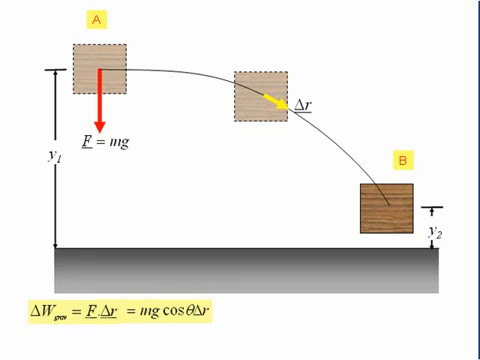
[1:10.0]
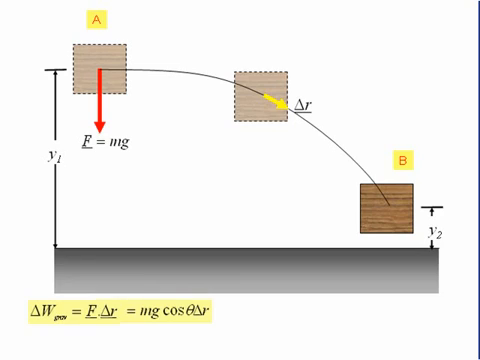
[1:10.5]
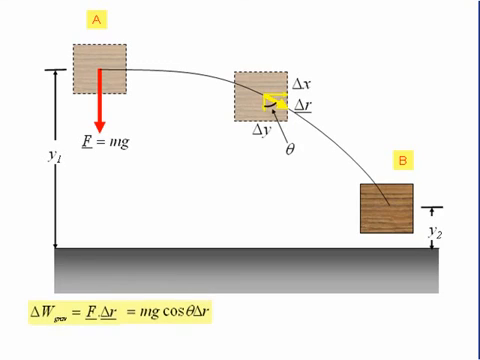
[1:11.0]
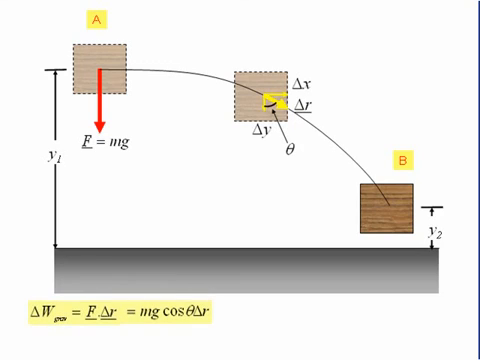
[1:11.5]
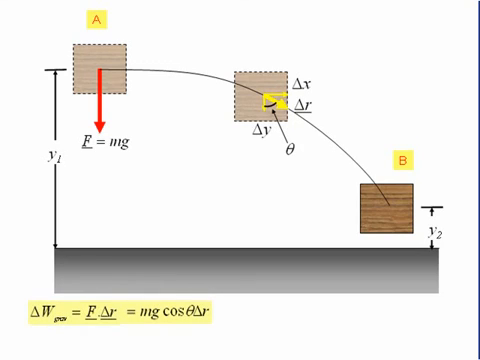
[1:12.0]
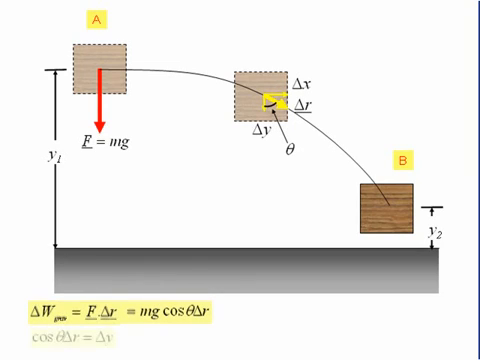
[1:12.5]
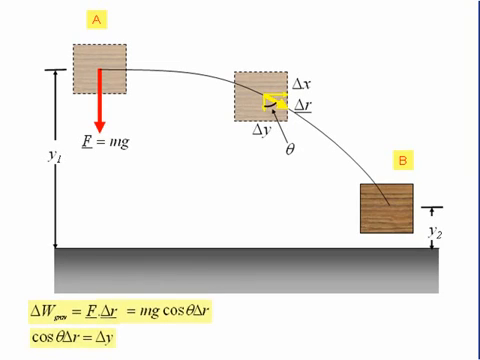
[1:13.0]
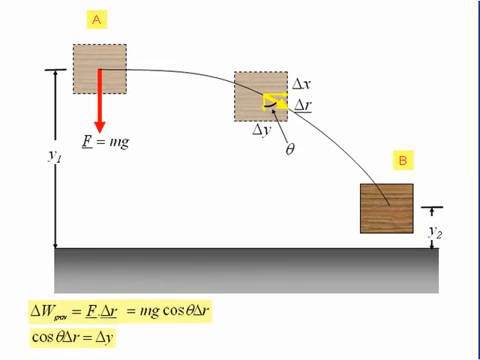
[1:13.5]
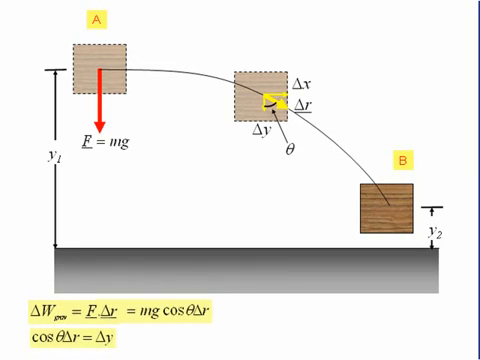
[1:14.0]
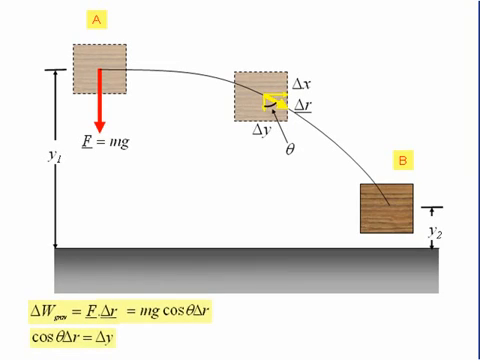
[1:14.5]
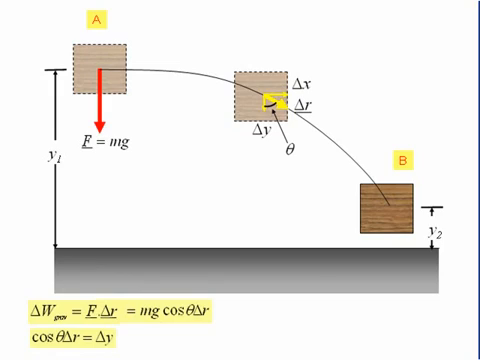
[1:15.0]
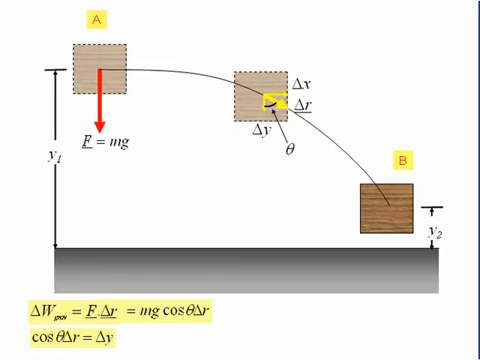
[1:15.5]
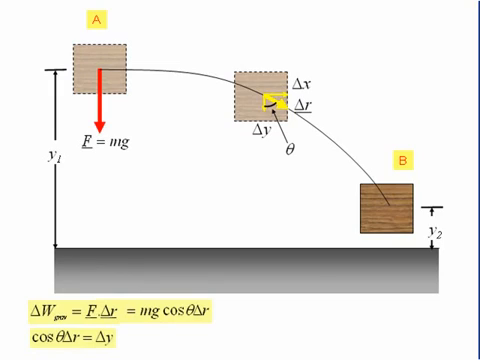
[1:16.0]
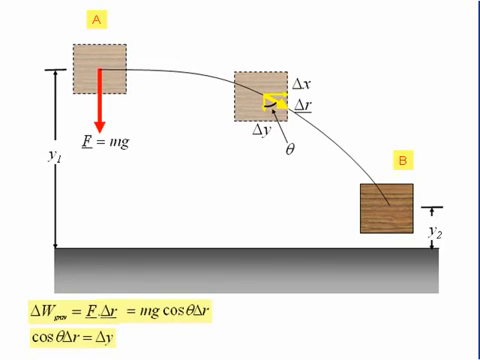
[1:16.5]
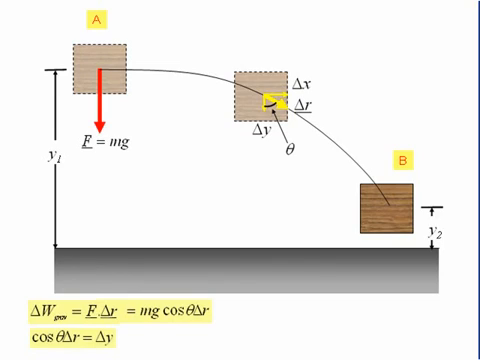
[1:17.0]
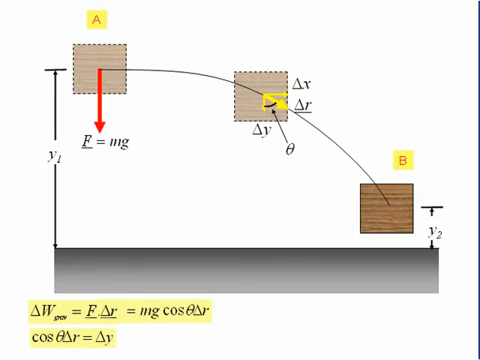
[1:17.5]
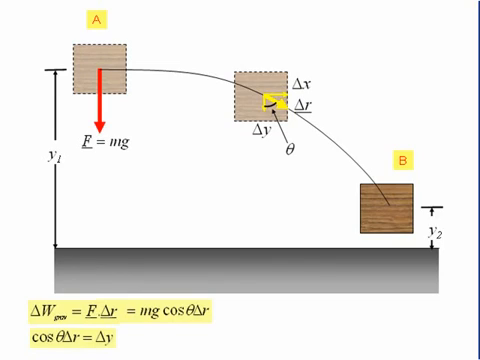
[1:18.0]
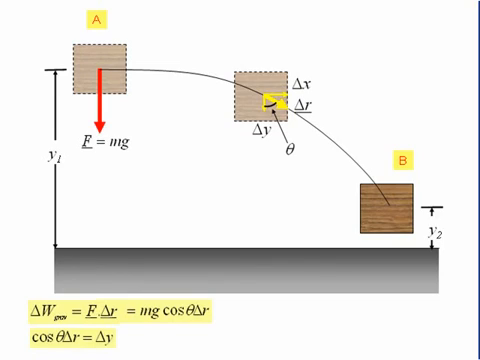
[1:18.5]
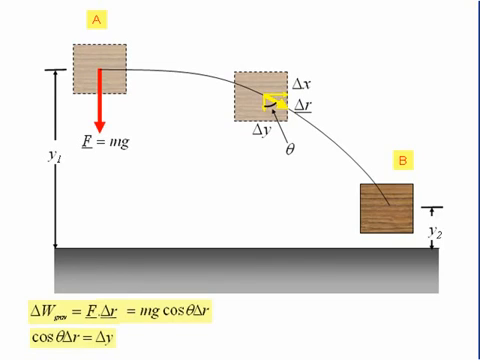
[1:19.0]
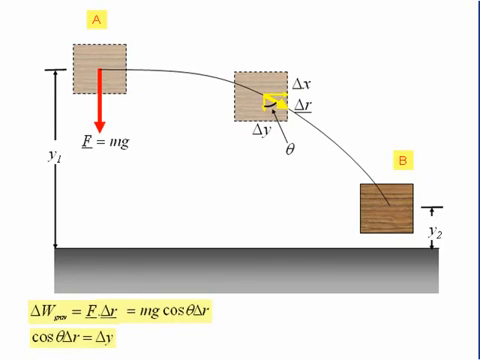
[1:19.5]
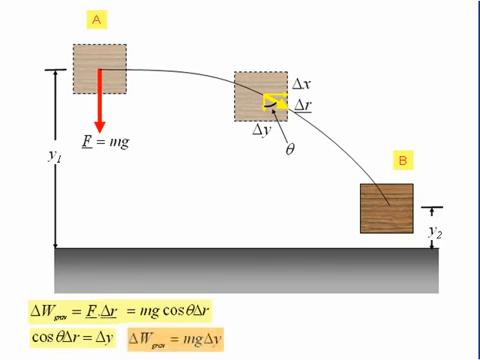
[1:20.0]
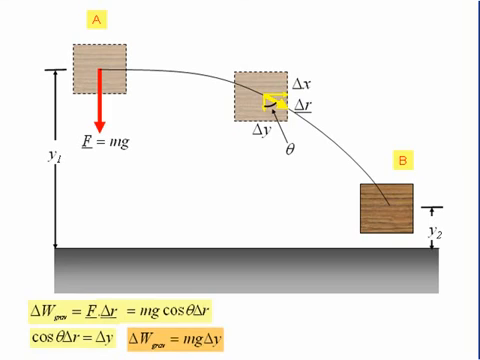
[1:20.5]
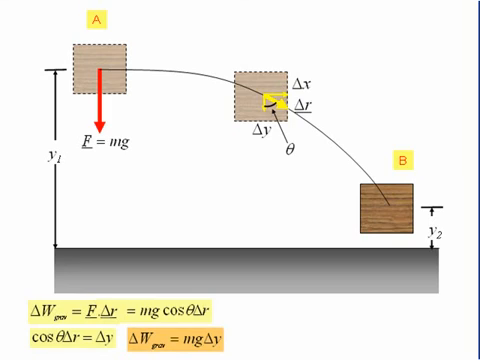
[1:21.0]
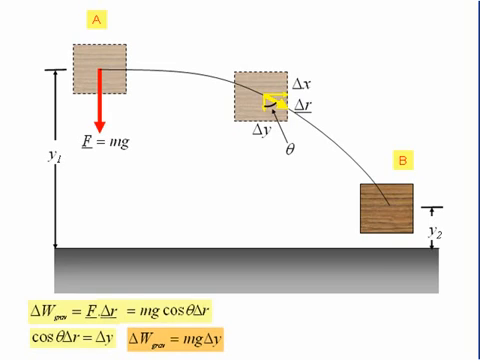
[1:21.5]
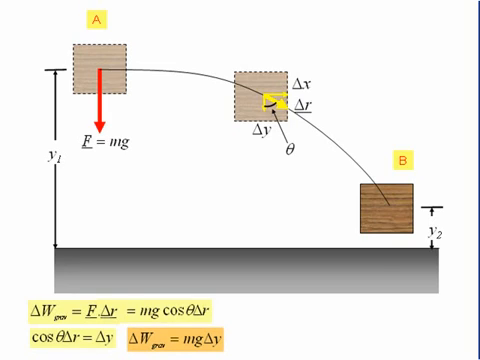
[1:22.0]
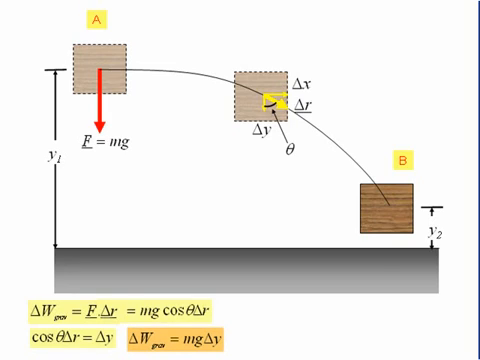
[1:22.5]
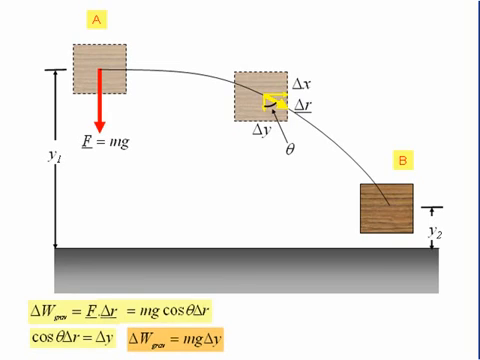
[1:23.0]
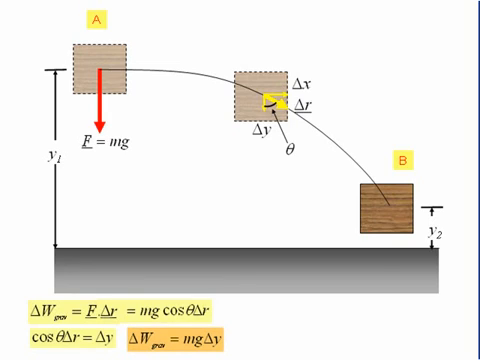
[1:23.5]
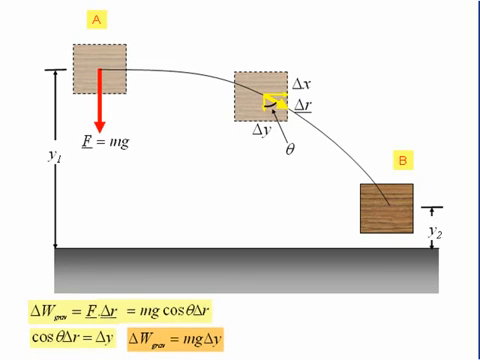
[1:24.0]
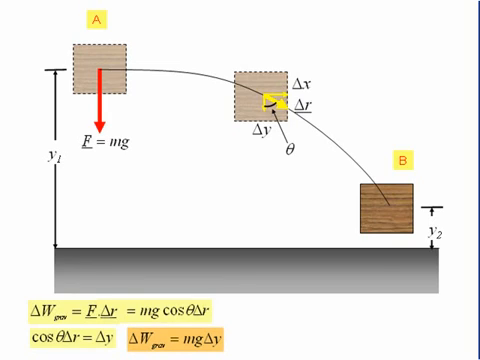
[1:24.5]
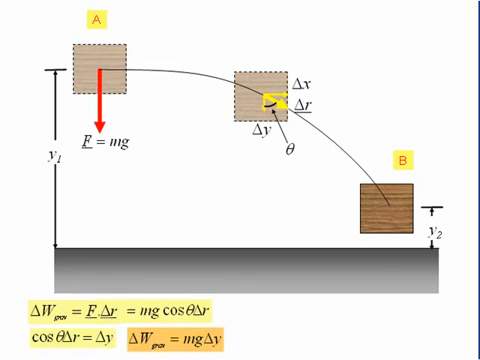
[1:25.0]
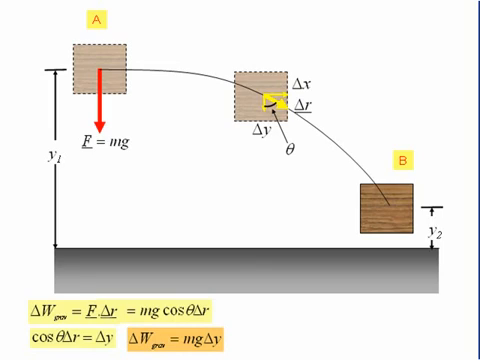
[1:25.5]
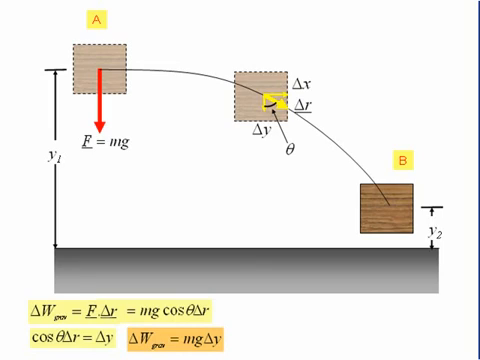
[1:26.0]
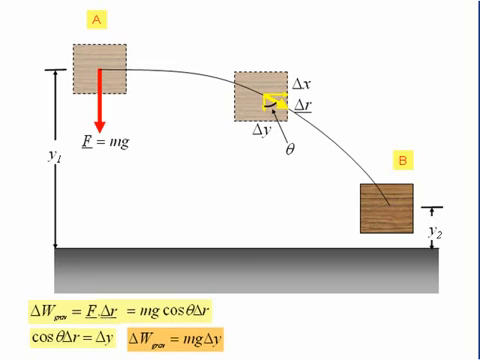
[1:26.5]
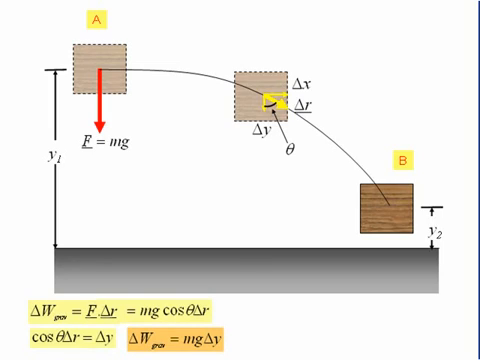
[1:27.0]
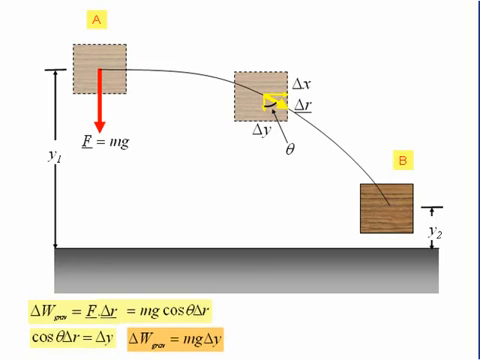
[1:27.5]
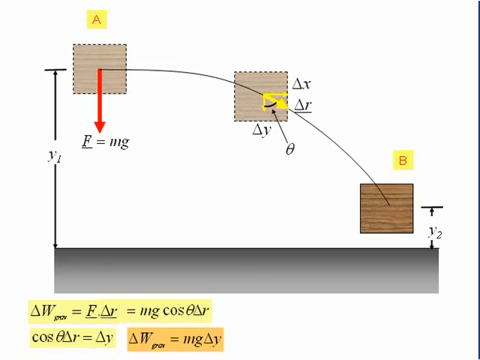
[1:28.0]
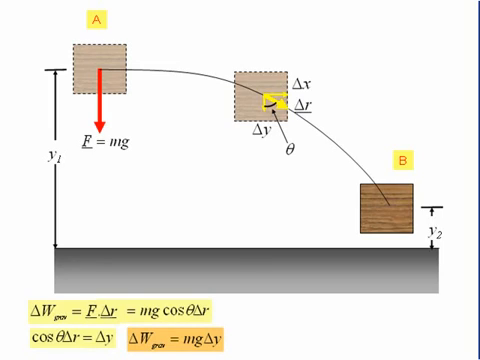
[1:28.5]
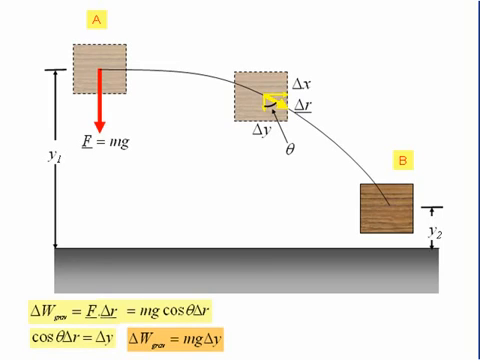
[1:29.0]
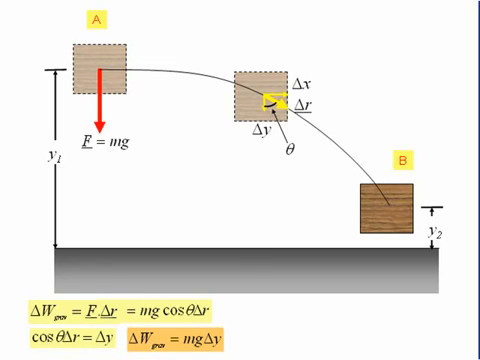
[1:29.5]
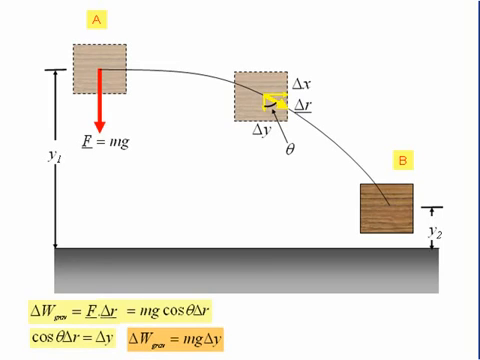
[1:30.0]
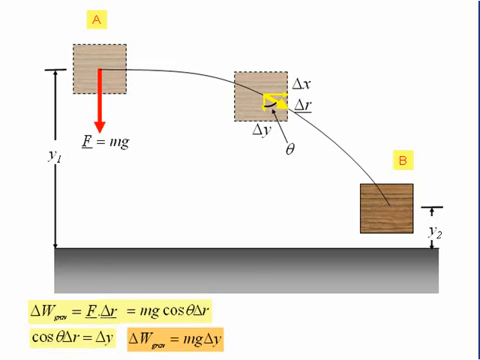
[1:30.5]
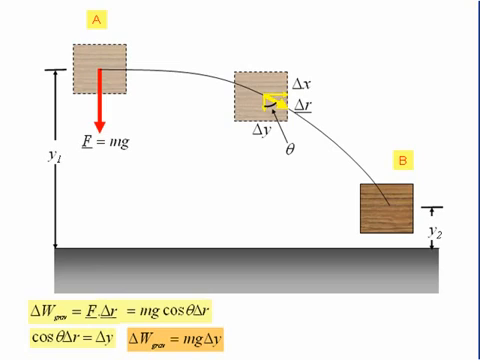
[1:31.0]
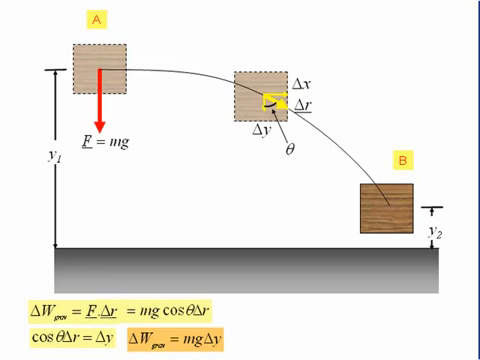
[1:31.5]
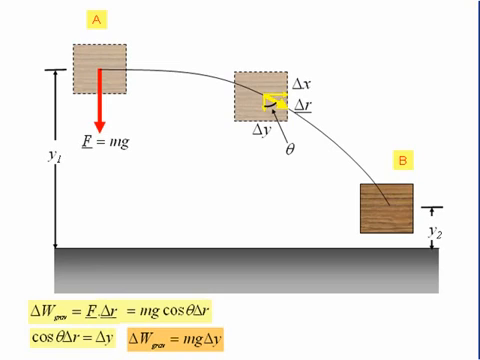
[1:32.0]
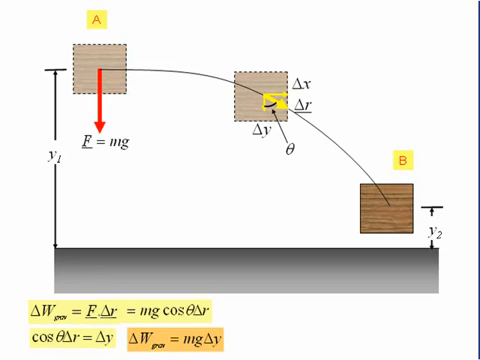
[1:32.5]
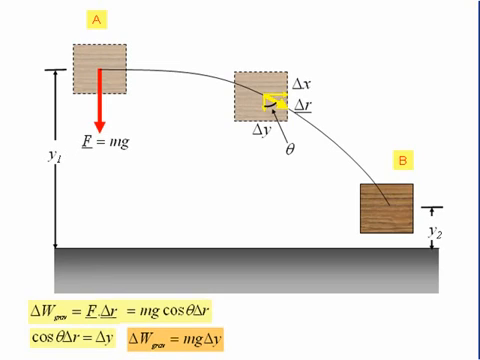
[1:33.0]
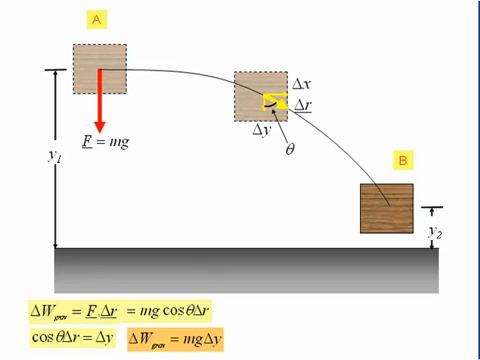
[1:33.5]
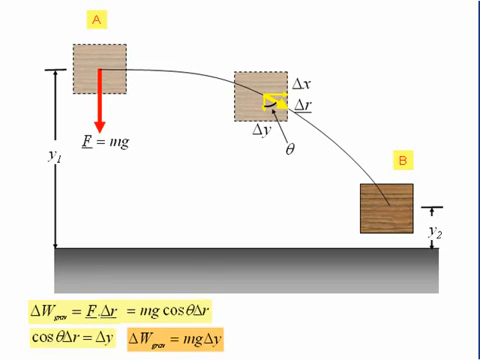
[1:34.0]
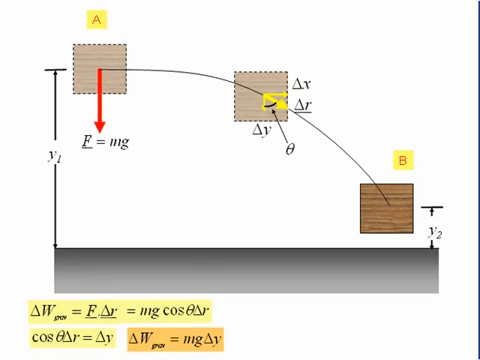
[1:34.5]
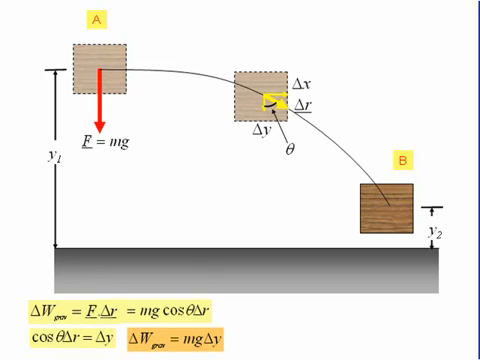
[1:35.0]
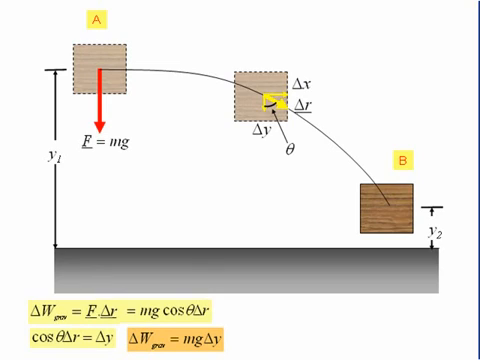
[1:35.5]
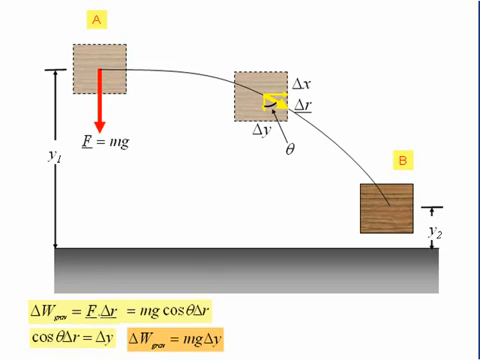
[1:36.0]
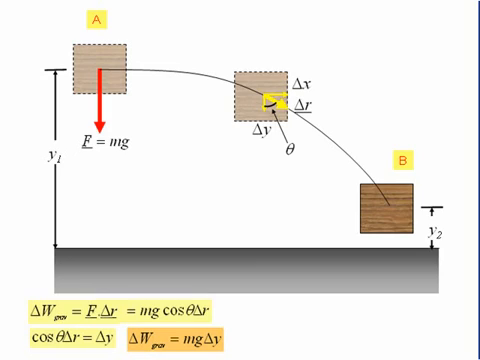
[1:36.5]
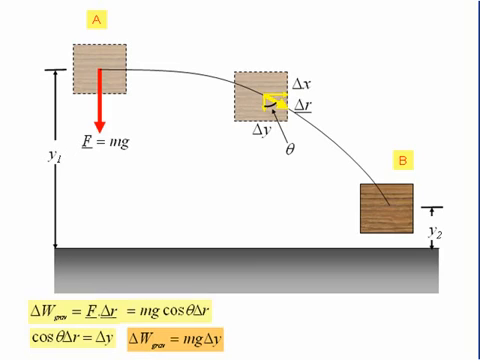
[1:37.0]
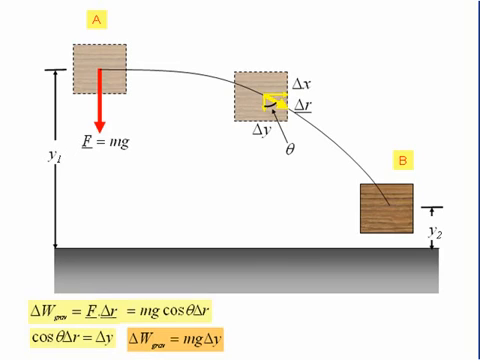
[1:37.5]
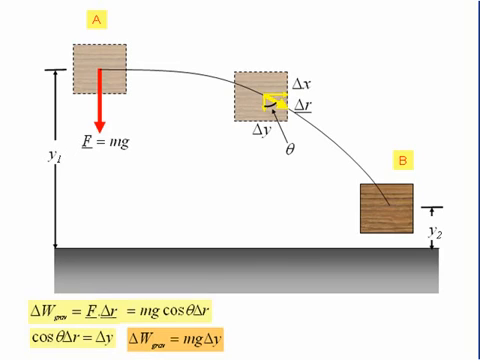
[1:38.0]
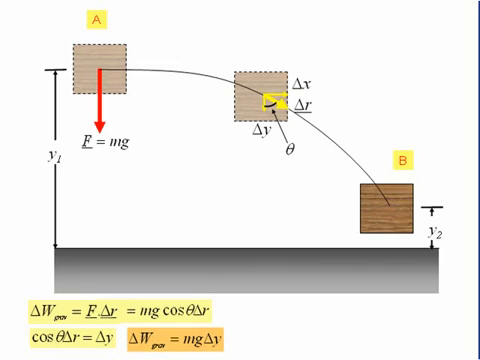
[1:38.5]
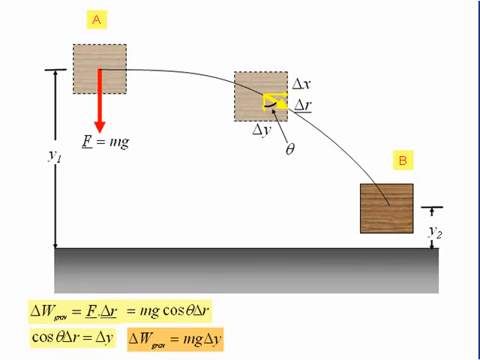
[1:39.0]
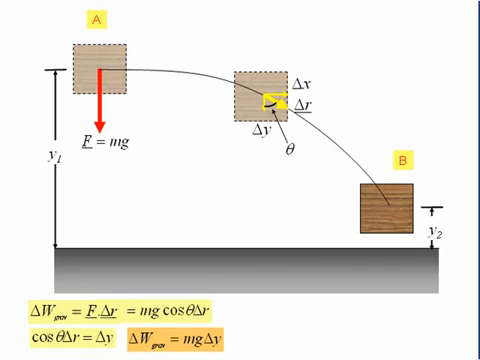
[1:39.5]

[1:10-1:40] Below is a formula: ΔW, with a subscript that is not clearly visible, equals F ΔR (both F and ΔR underlined), which equals mg cos θ ΔR. Three yellow arrows are joined in the middle of the middle box. Below the square box, ΔY is written. Labels on the side appear to belong to the arrows: ΔY seems to label the arrow going downward, ΔX labels the arrow going to the side, and the curved arrow going downward is labelled ΔR. A curved line drawn between the ΔR arrow and the ΔY arrow joins the two lines to form an angle, labelled θ. Below the earlier equation another equation reads cos θ ΔR = ΔY, also highlighted in yellow. Beside it, another equation, ΔW (with a subscript that cannot be seen) = mg ΔY, is highlighted in orange.